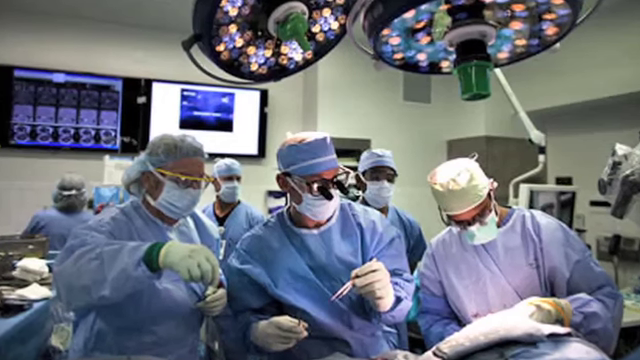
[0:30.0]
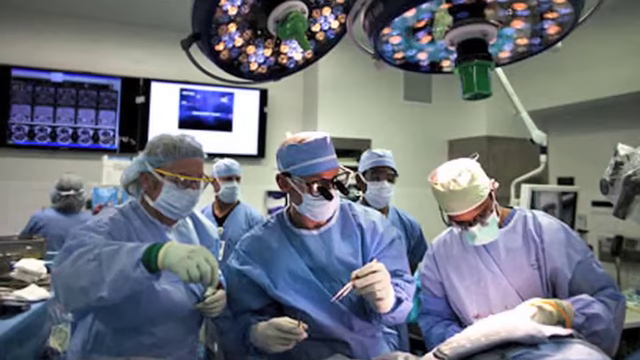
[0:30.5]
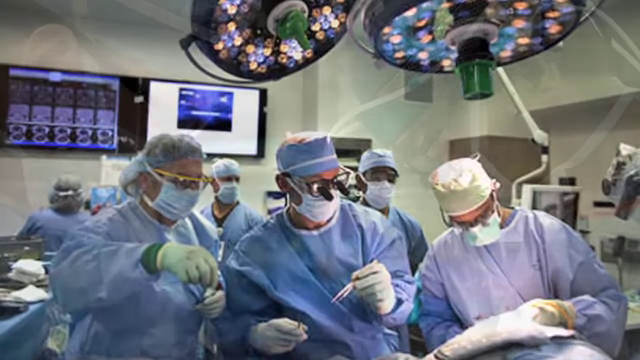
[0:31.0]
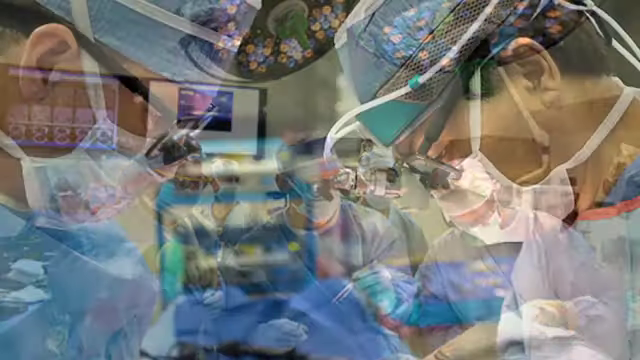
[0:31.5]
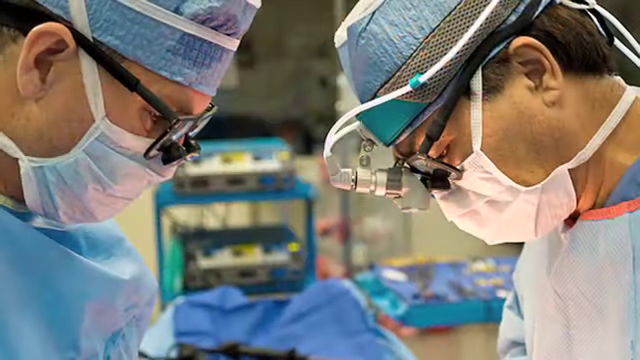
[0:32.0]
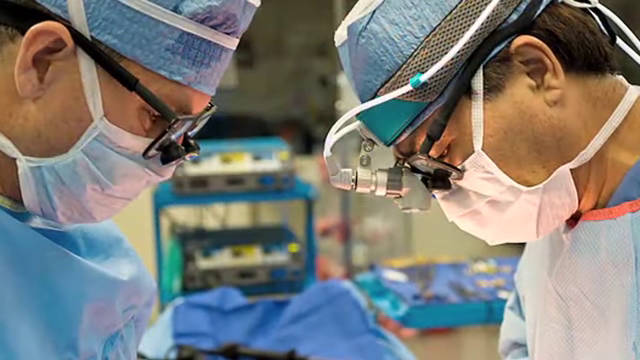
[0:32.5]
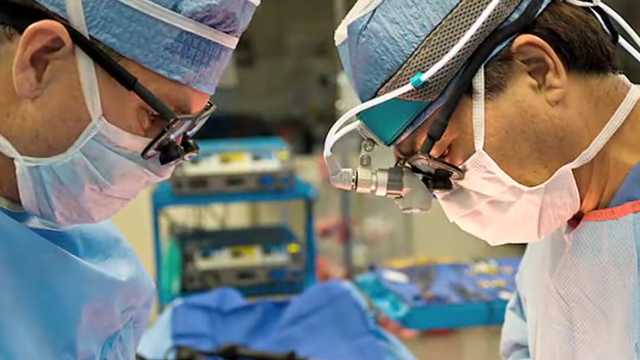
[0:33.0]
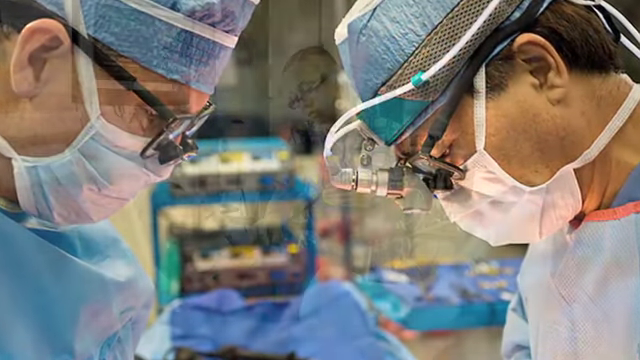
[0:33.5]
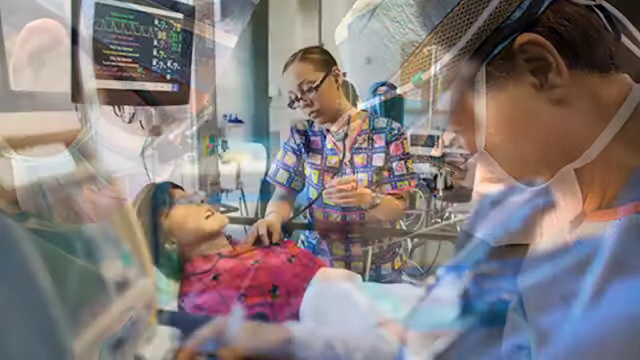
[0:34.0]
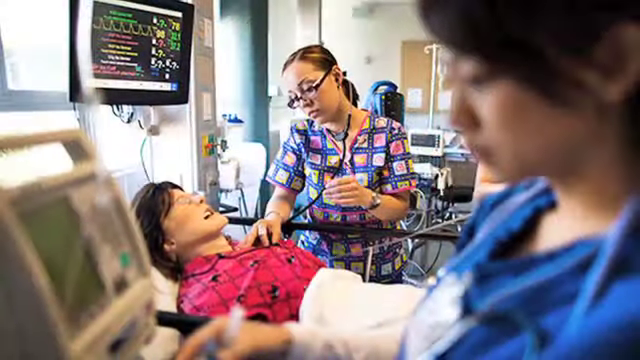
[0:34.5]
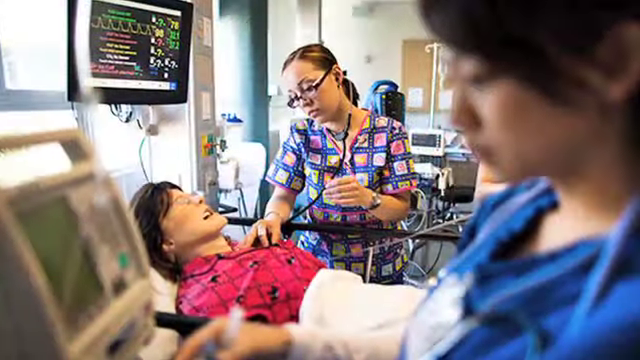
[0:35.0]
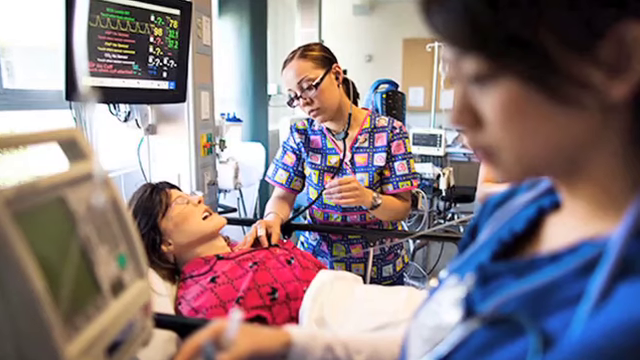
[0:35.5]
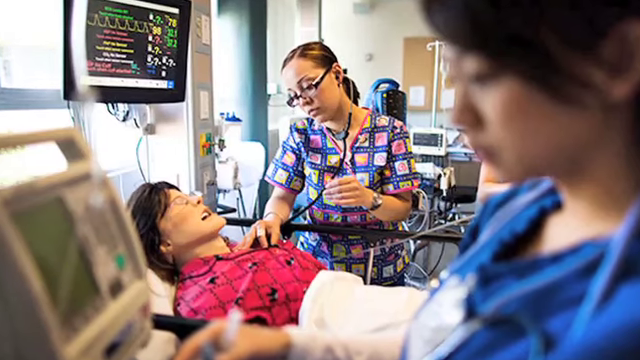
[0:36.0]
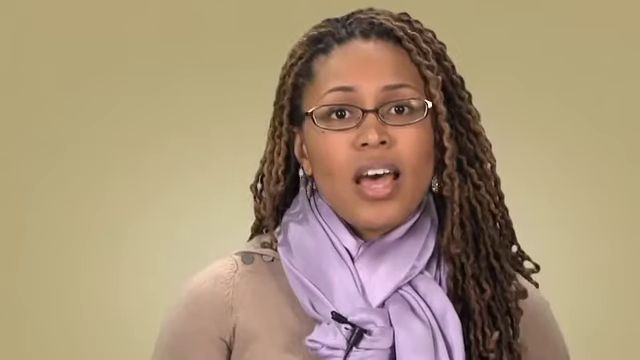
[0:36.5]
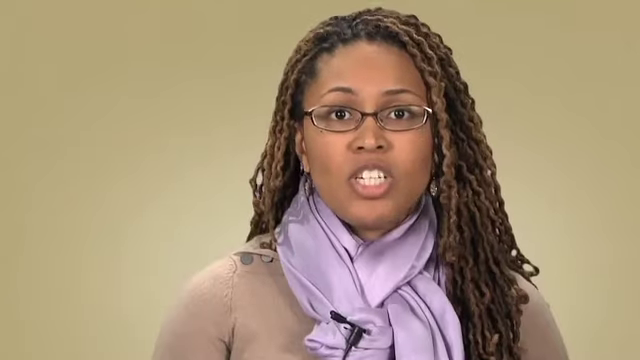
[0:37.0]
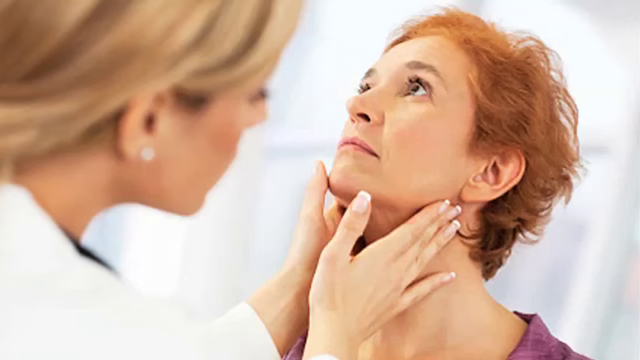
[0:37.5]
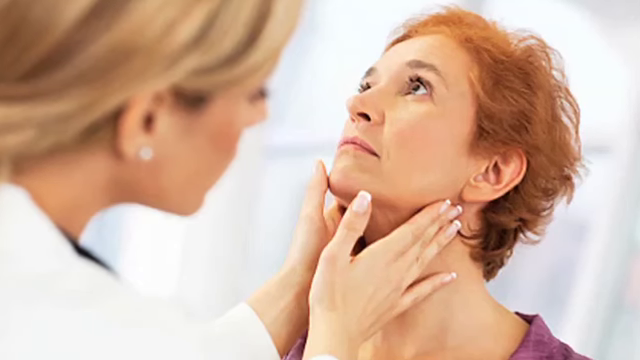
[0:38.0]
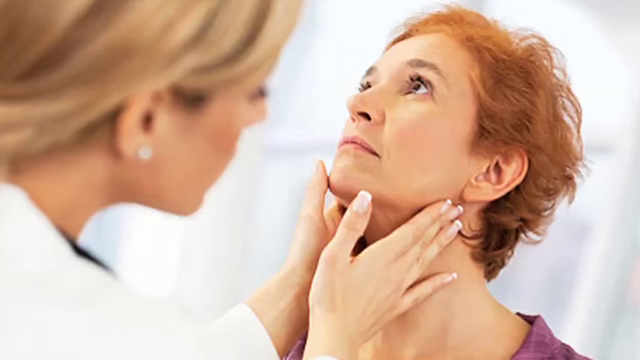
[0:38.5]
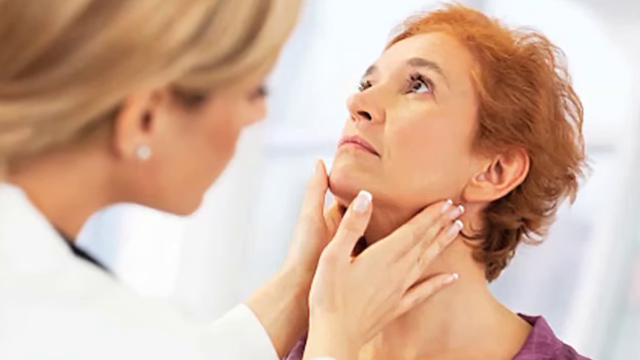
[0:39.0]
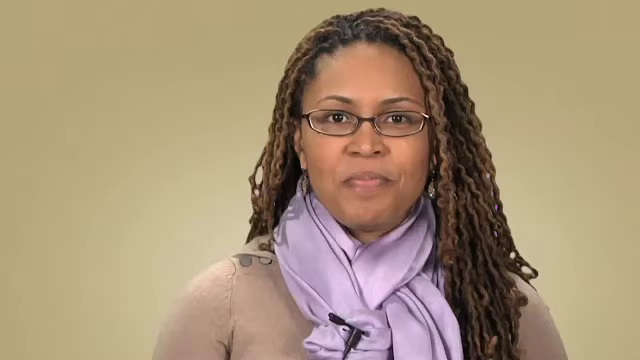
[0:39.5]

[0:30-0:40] Three doctors are in the forefront, with several more doctors behind them; these three seem to be the ones performing the surgery. One wears glasses that look like they have small binoculars on them so he can see. All the doctors wear head coverings, face masks and gloves, and the doctors behind them seem to be watching. One of the doctors looks like he has some tools in his hands. Another picture shows two of the doctors wearing a smaller version of the glasses with smaller binoculars, and one looks like he has a light in the middle of his forehead to shine down as he looks. Next, a nurse practices on a mannequin, apparently taking the mannequin's heartbeat. The video returns to the African-American woman speaking; she wears glasses, a purple-like scarf and a blue-brown sweater, and her hair is braided. Then a female doctor examines another Caucasian woman, with her hands around what looks like her throat and chin, probably checking her lymph nodes for swelling. The video then goes back to the African-American woman who has been speaking.